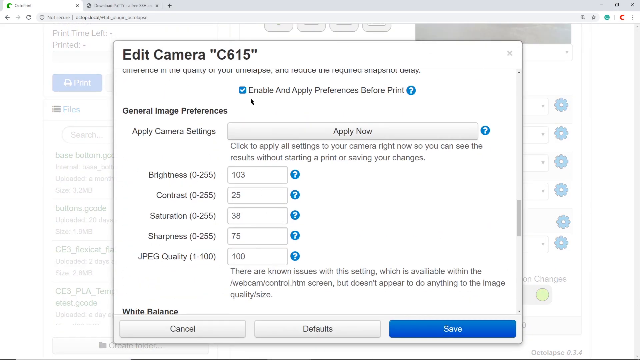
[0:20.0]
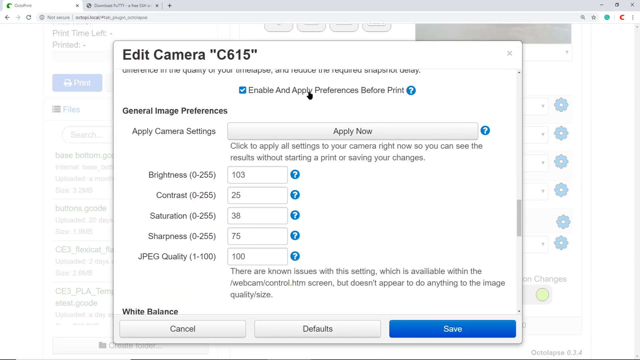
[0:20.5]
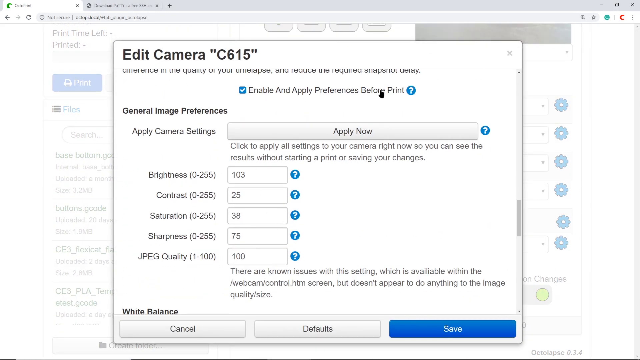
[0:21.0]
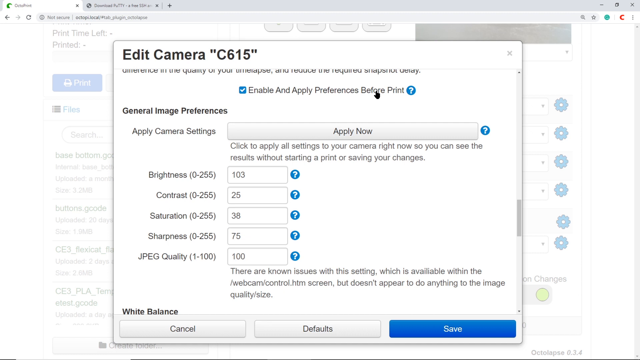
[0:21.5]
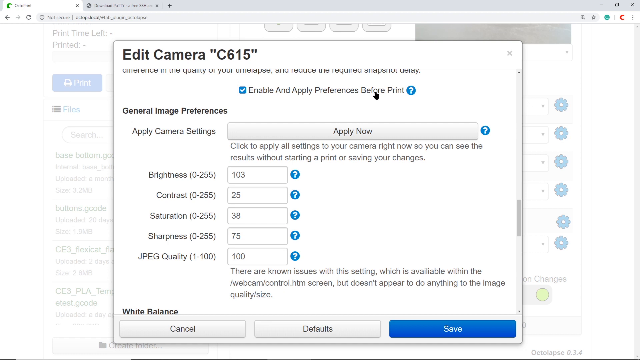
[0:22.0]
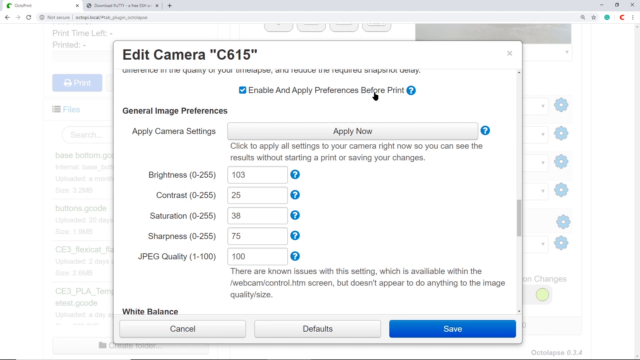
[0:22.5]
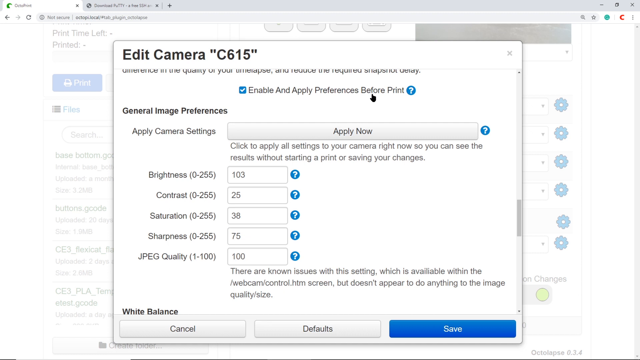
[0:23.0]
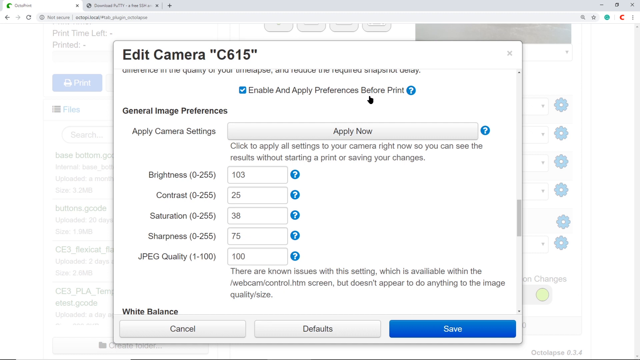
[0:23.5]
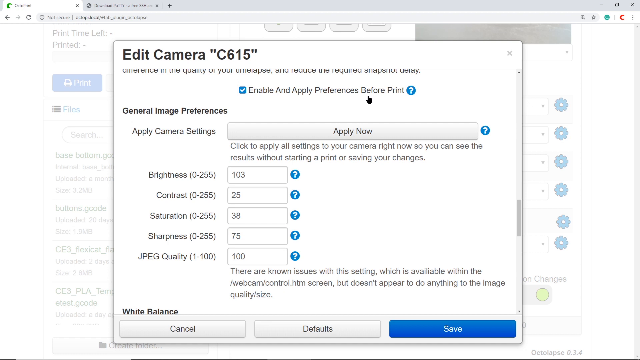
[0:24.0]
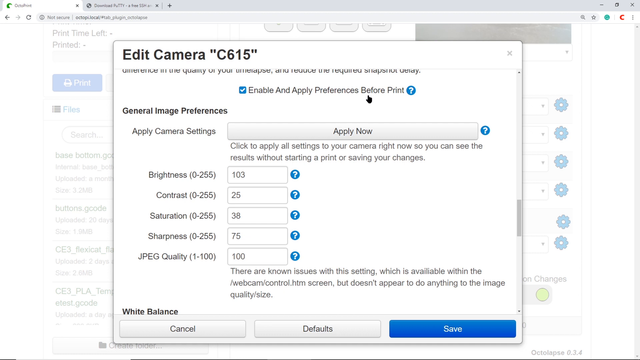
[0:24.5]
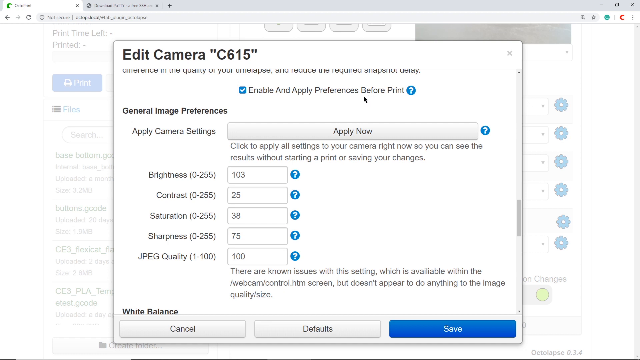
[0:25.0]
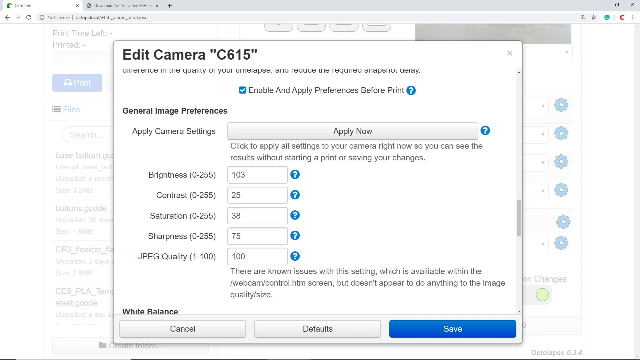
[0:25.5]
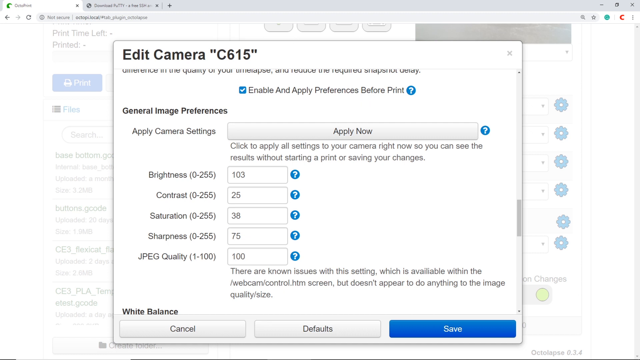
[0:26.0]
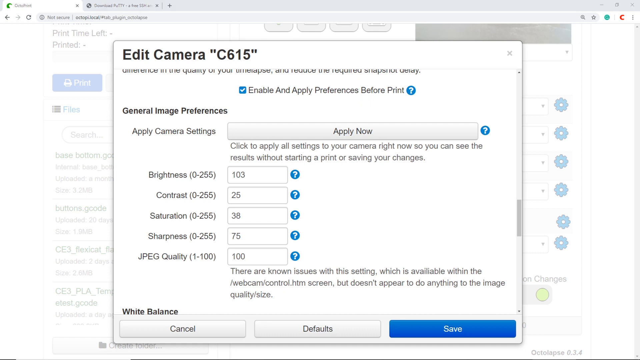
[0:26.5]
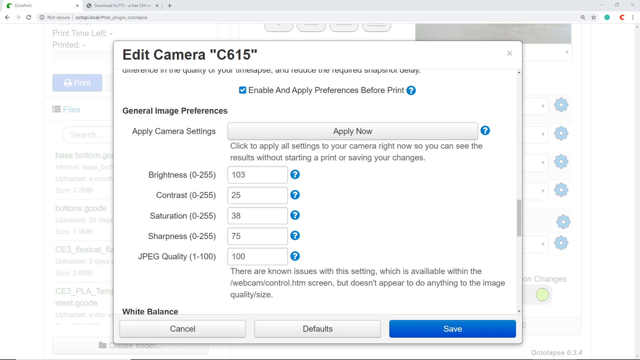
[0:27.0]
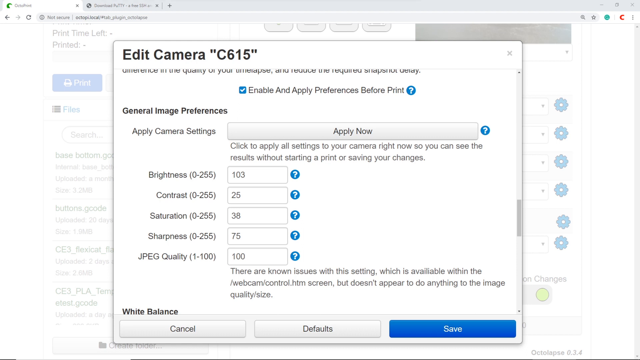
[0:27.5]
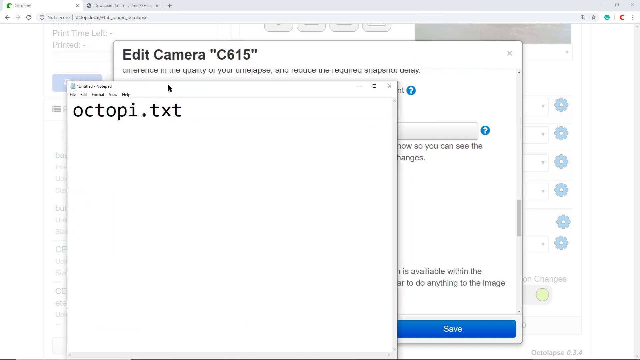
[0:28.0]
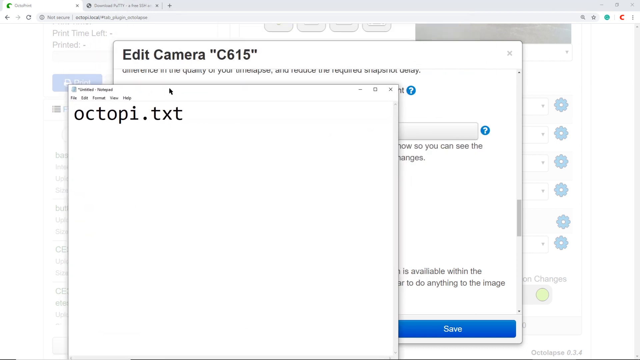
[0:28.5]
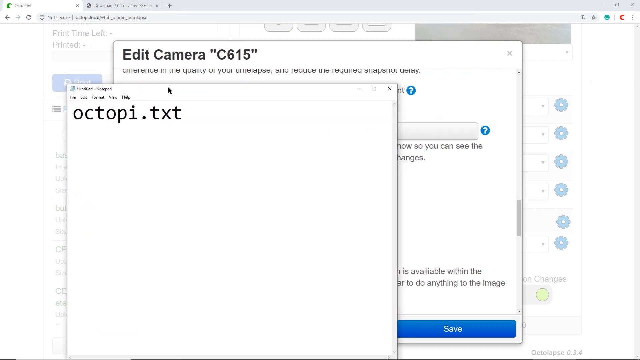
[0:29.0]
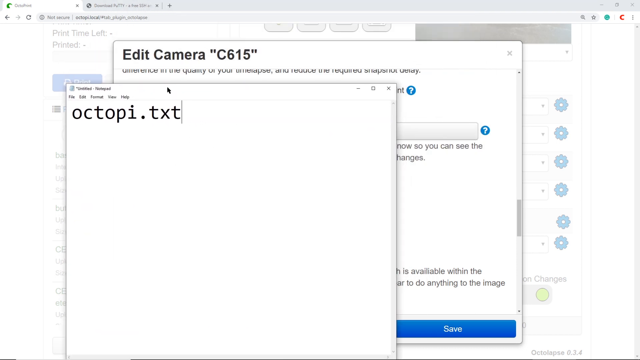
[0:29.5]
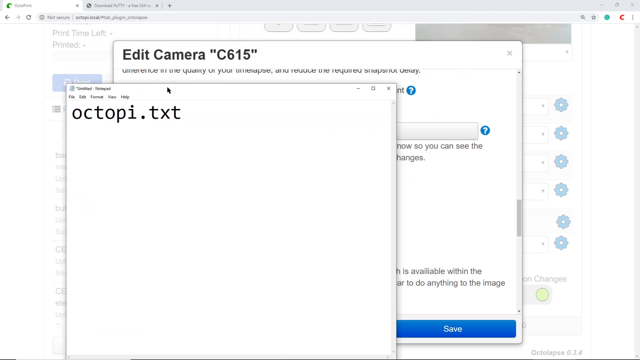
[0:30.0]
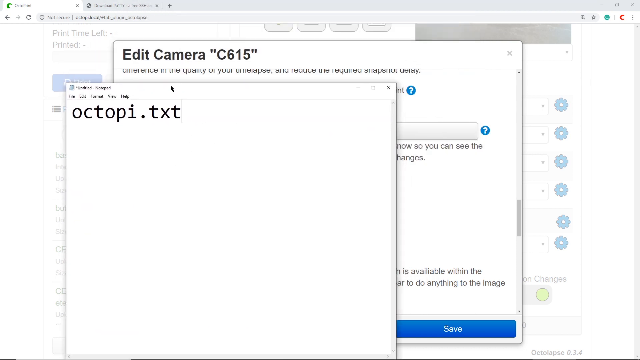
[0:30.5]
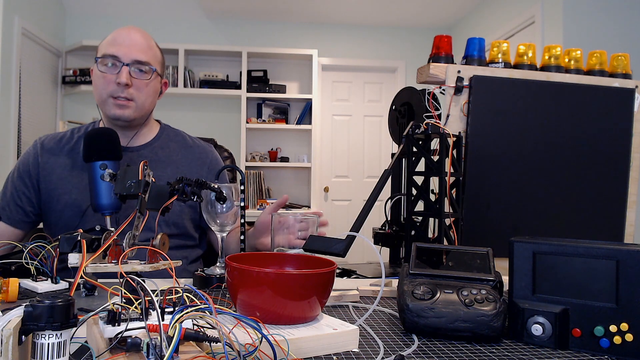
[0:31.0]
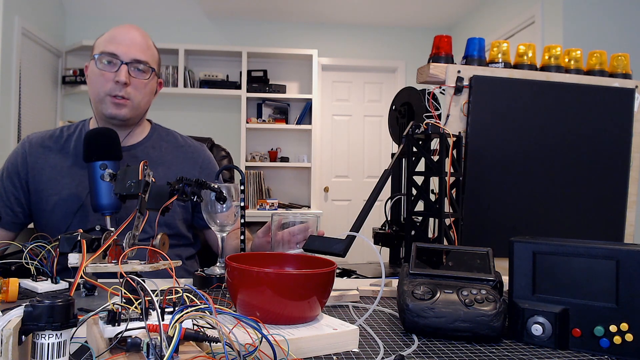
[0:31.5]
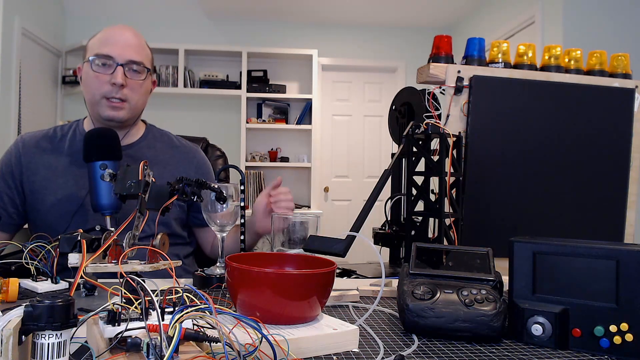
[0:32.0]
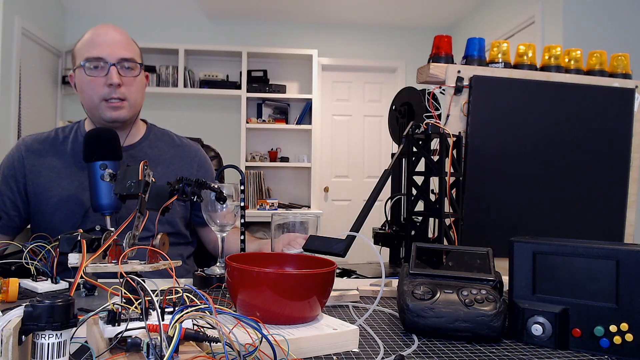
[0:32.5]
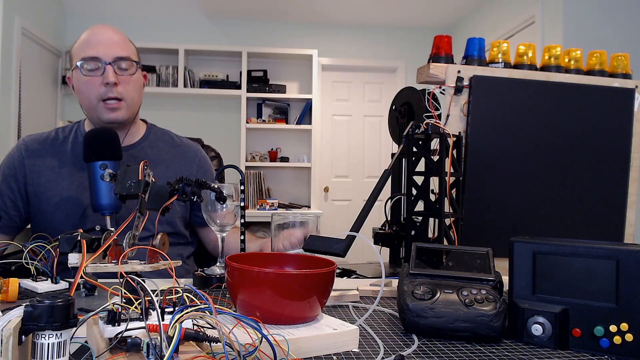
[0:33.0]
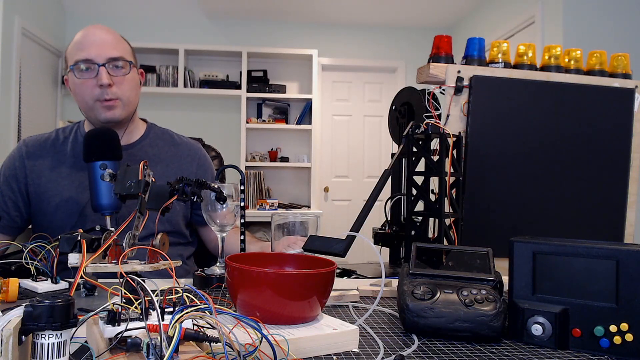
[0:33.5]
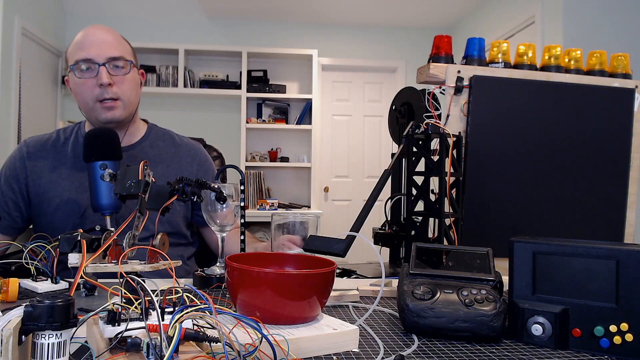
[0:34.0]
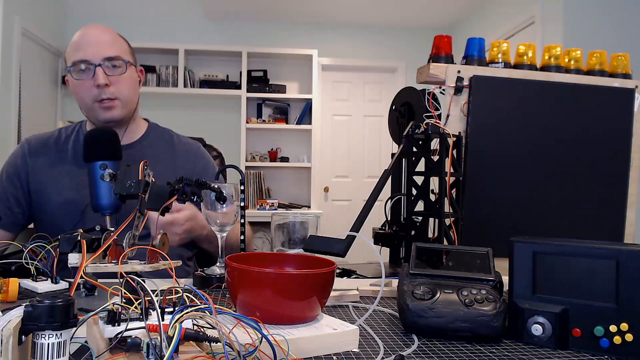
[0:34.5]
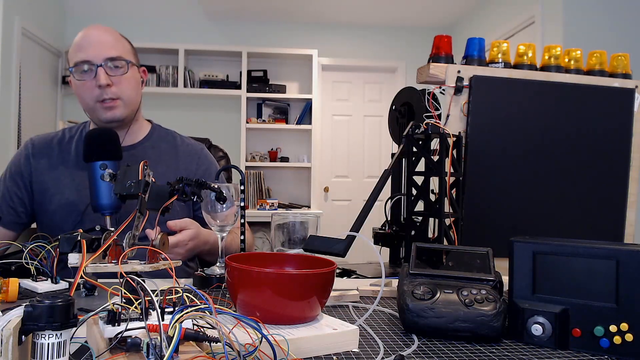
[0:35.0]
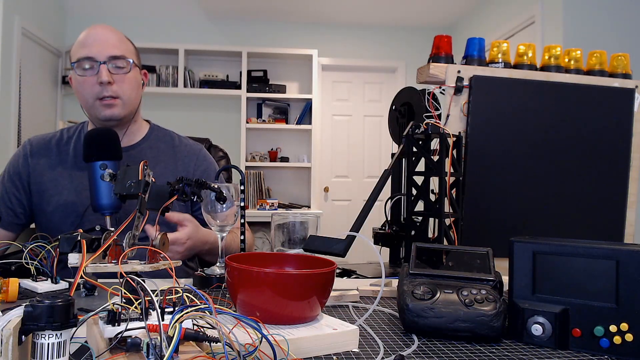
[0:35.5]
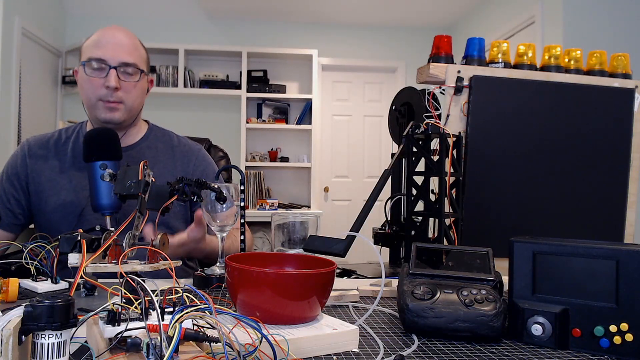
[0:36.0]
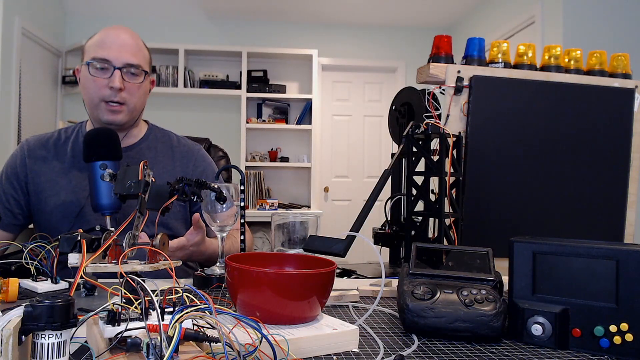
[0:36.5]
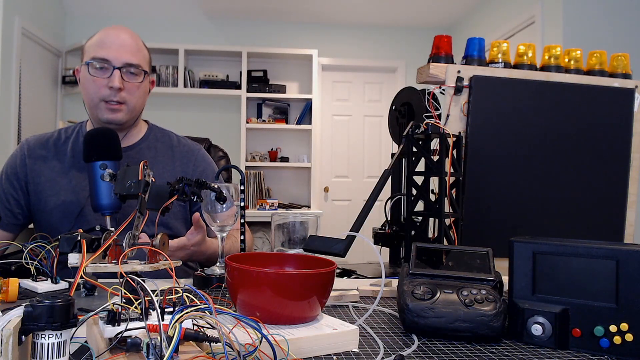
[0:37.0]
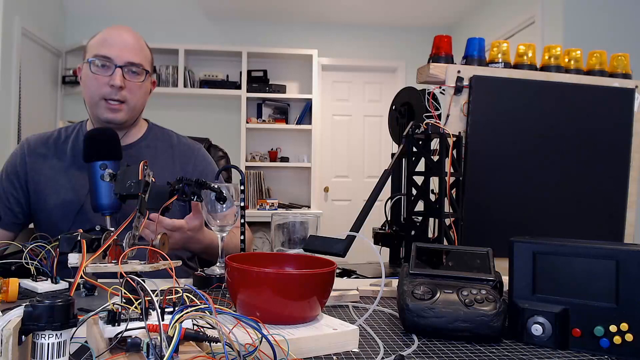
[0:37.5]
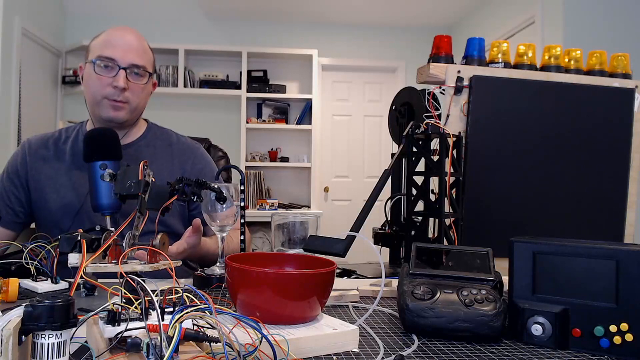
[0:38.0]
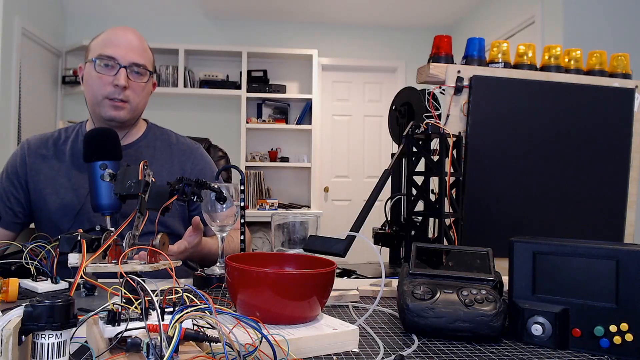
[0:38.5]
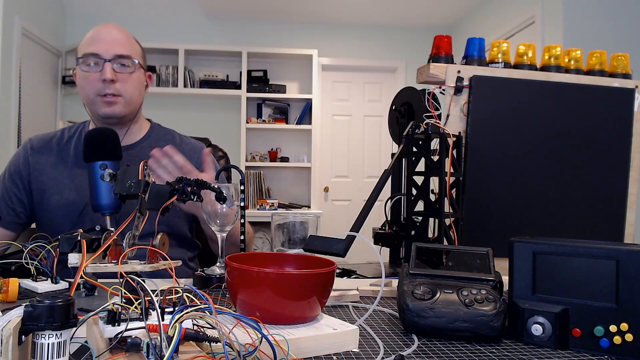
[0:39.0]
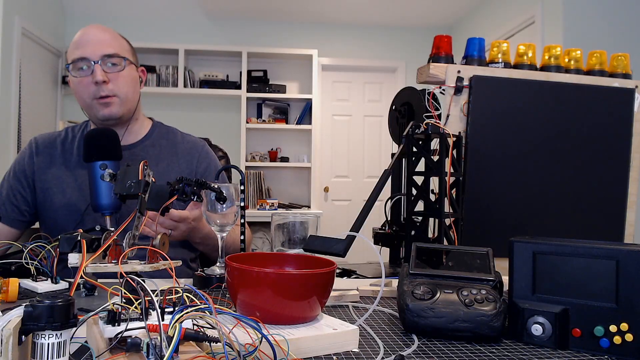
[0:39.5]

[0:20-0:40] A man, apparently teaching about camera settings, pulls up a screen on his computer that says "edit camera c615". Partly cut off at the top is text reading "difference in the quality of your time space or time lapse" and "reduce the required". He has a box checked for "enable" and "apply preferences before print". Further text says "general image preferences" and "apply camera settings", and there is a button that says "apply now?" with text to the right reading "click to apply all settings to your camera right now so you can see the results without starting a print or saving your changes". Below are numbers that can be picked for brightness, contrast, saturation, sharpness and JPEG quality, and an option for white balance, possibly. The cursor moves around the screen, pulling down something called "octopi.txt".